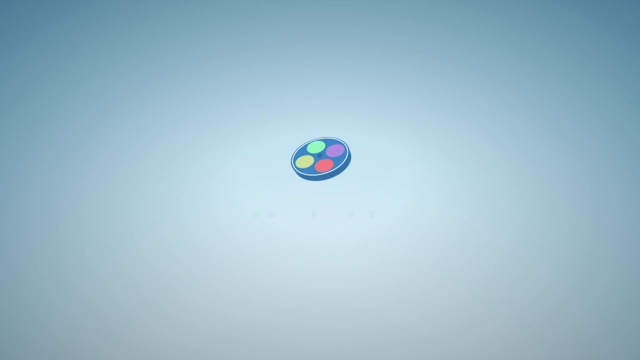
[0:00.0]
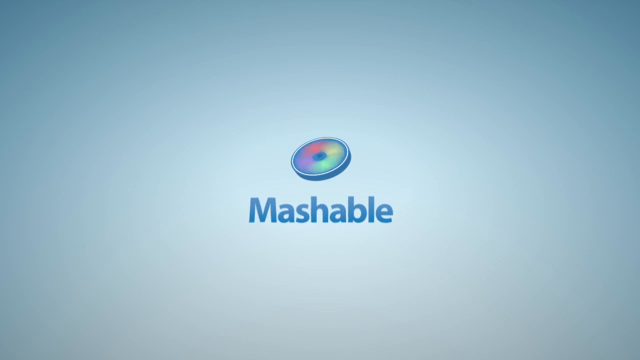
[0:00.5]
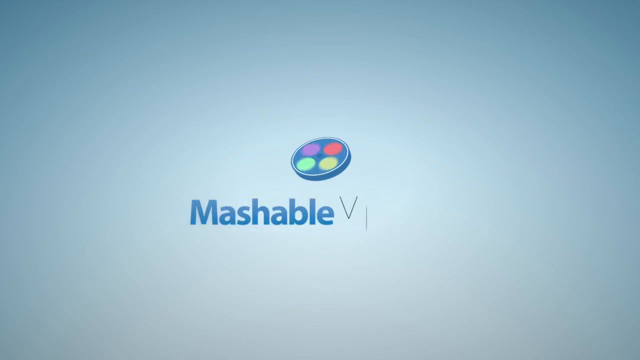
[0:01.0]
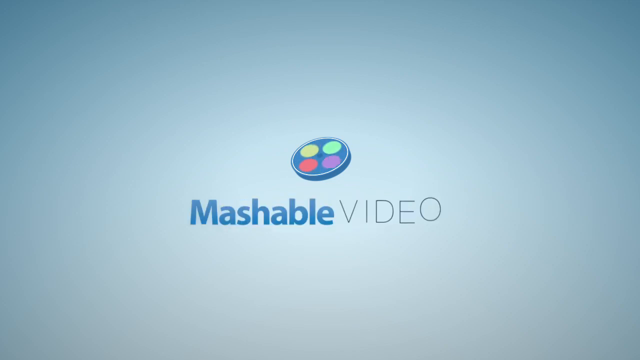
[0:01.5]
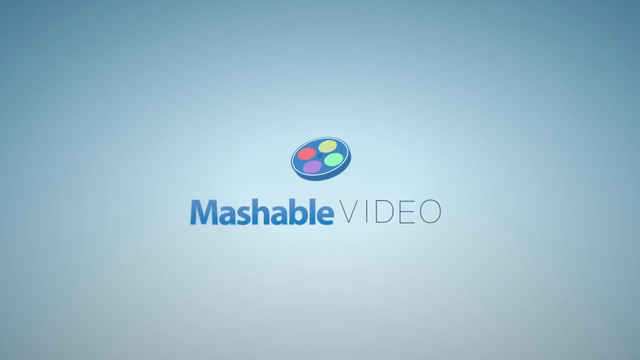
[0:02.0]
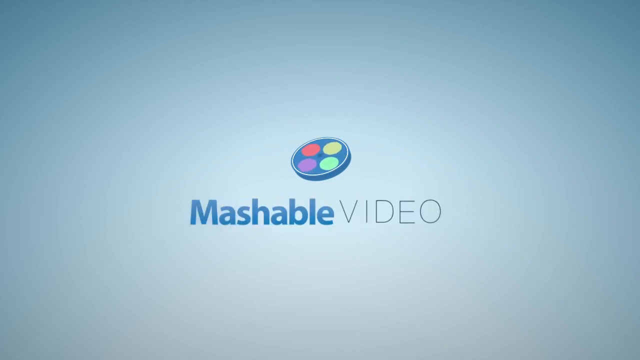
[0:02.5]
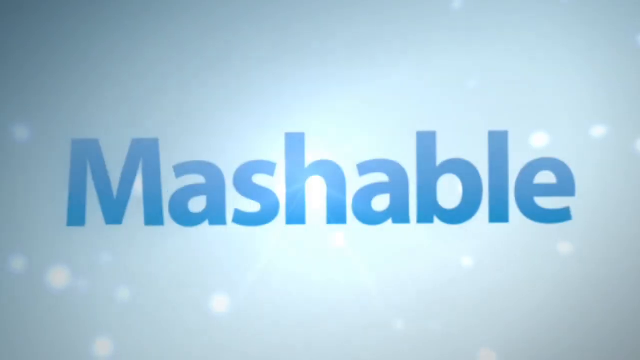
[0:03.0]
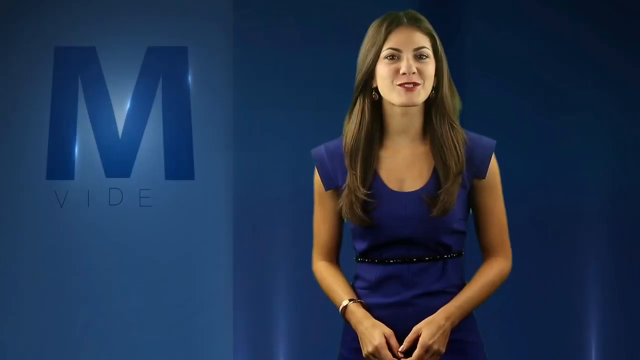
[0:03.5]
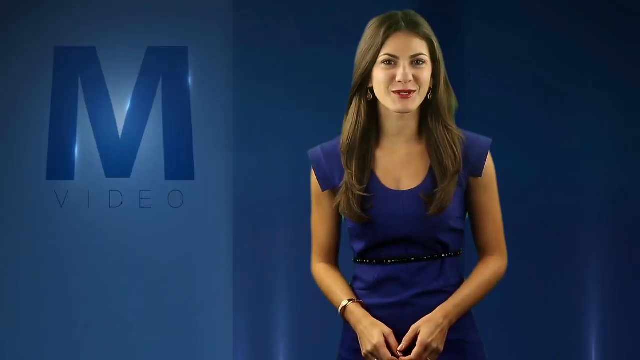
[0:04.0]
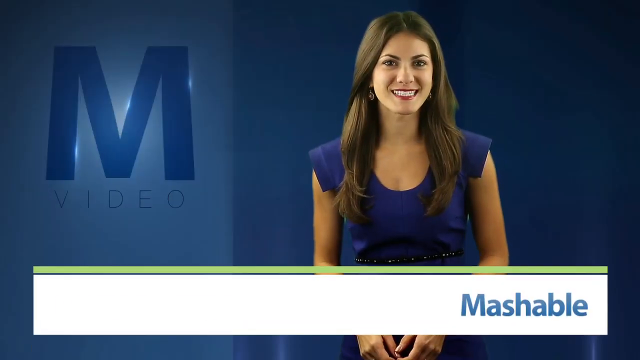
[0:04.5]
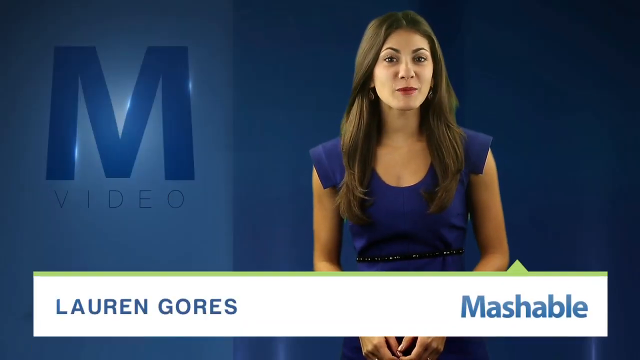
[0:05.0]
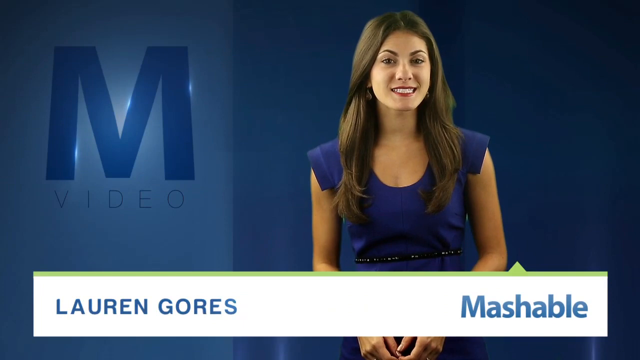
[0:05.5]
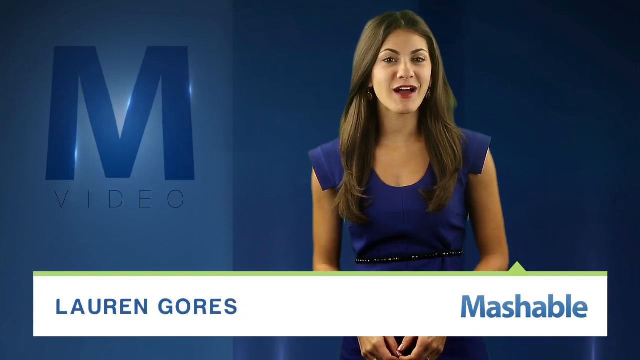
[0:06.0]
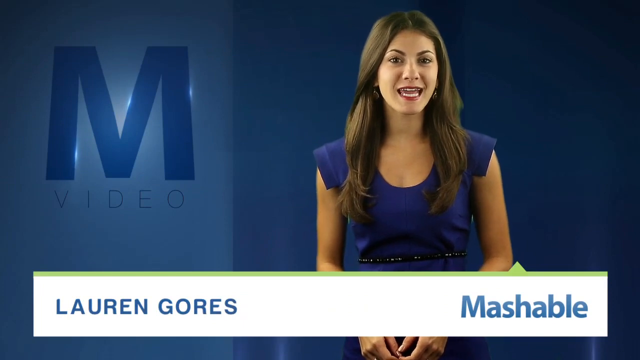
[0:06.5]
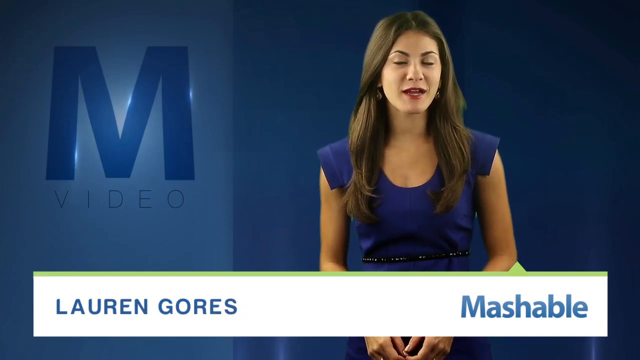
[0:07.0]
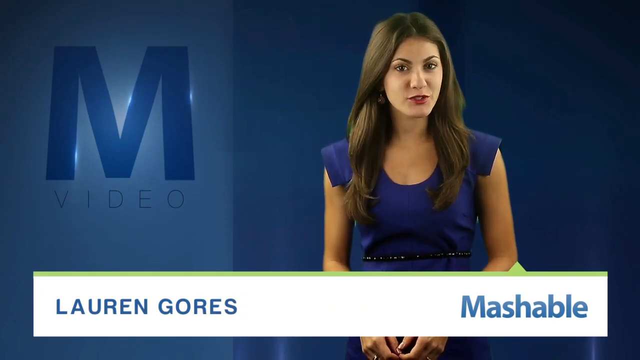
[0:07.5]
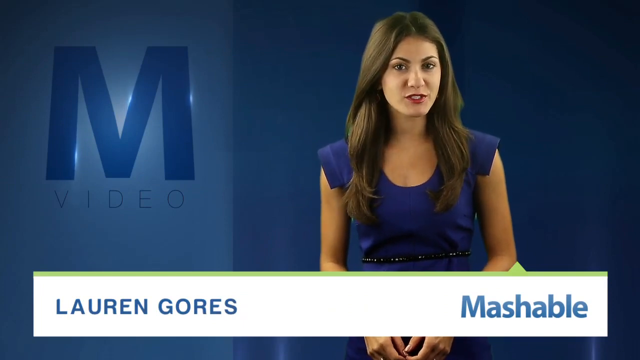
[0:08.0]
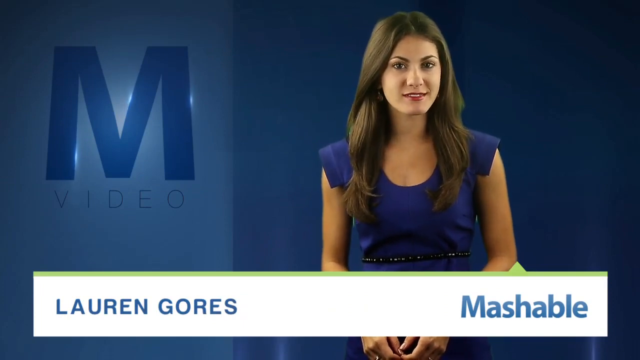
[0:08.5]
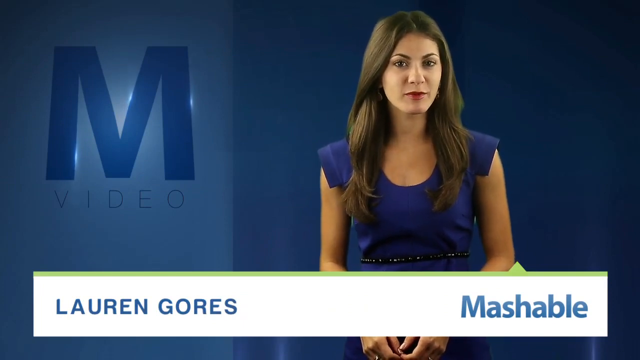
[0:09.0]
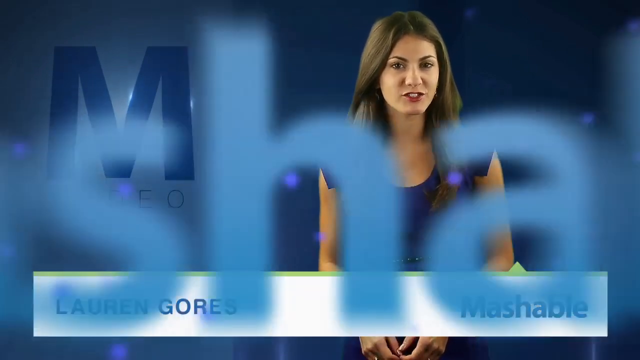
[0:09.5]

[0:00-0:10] The video begins with a very light greyish-blue background, with darker blues on the edges and corners and a bit of black at the bottom. In the center, a round, somewhat three-dimensional disc with four separate circles and colors spins to the right, clockwise; this is the logo. As it spins, a smaller red circle is visible within, a purple one above, a light green one to the left of the purple, and a yellow one between the red and the green. The word "mashable" appears in dark blue text and slides slightly to the left in the center of the frame, followed by the word "video" in black text. The large word "mashable" then disappears, opening to a scene that is dark blue on the right and slightly lighter blue on the left, with a young woman who is the host of the program. She is Caucasian and slender, with dark brown hair just past her shoulders, brown eyes, and full makeup, and is very attractive. A large blue "M" is on the left side of the screen, and her name, "Lauren Gores", appears at the bottom against a white banner.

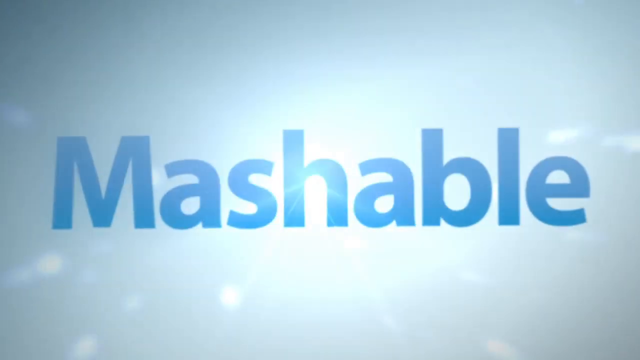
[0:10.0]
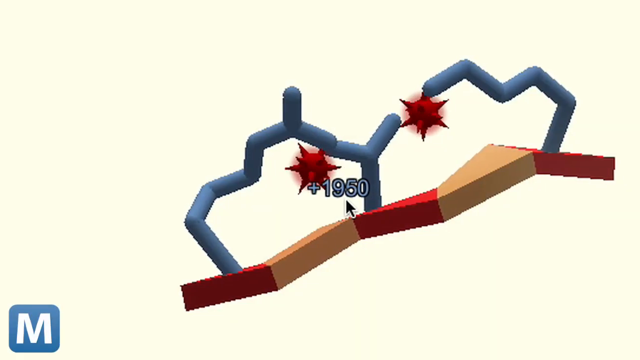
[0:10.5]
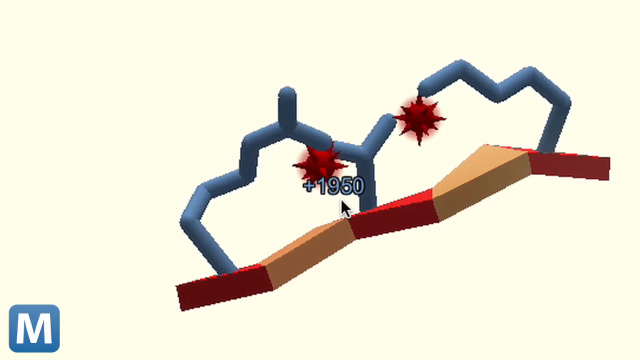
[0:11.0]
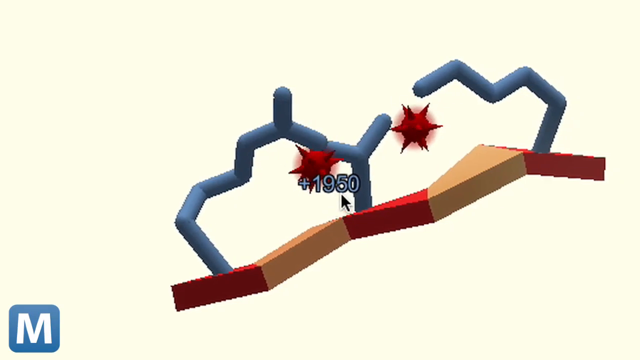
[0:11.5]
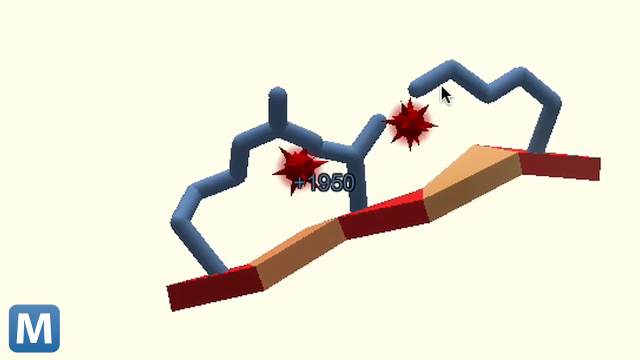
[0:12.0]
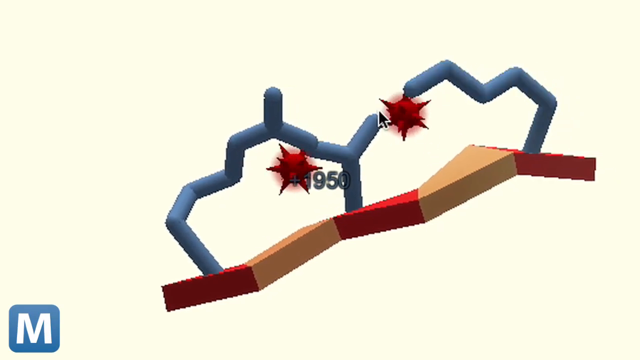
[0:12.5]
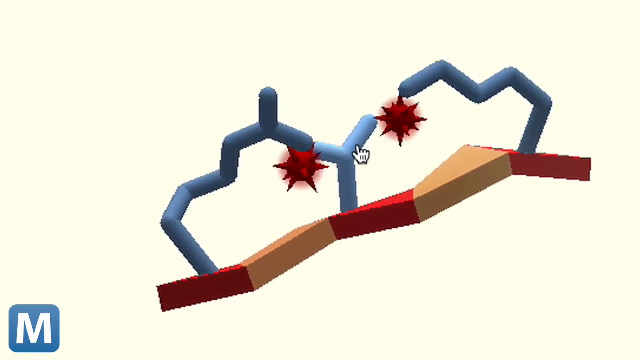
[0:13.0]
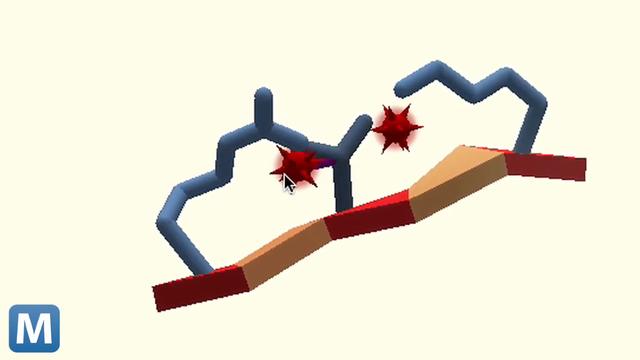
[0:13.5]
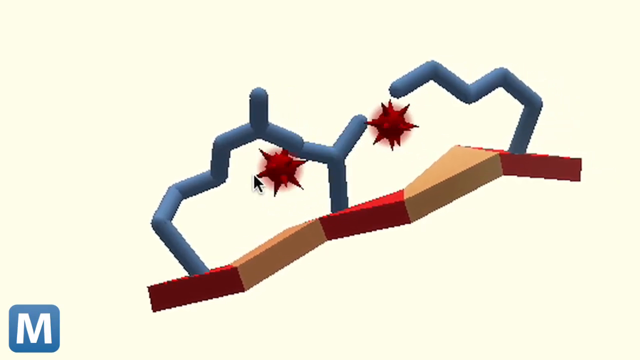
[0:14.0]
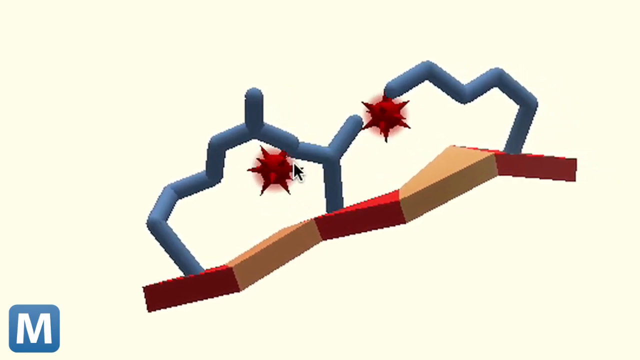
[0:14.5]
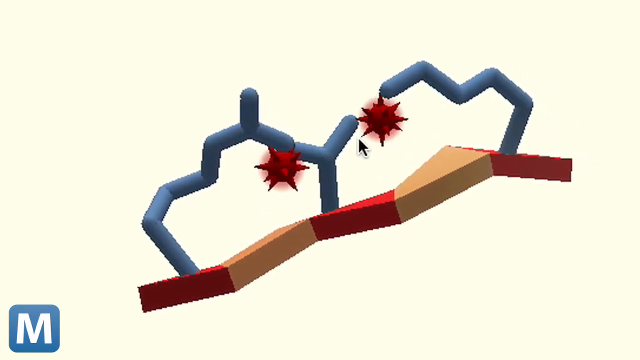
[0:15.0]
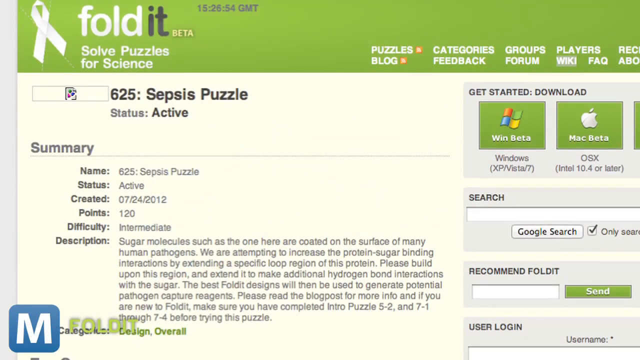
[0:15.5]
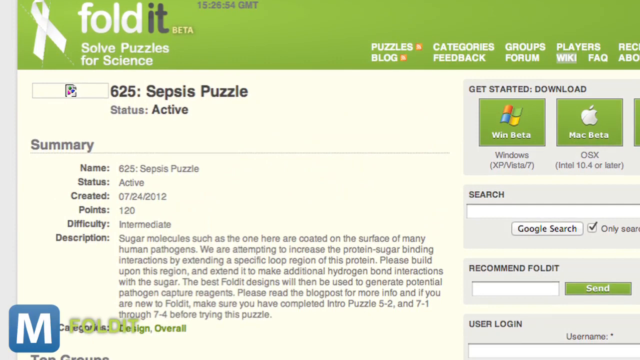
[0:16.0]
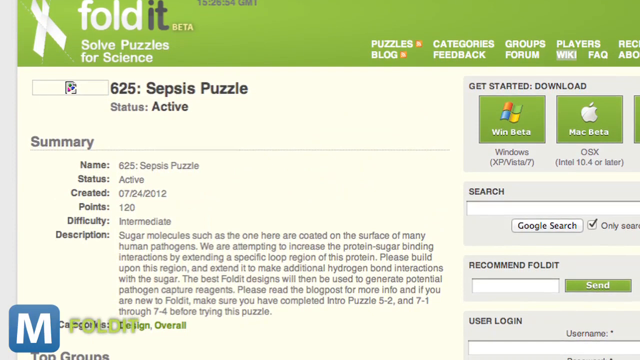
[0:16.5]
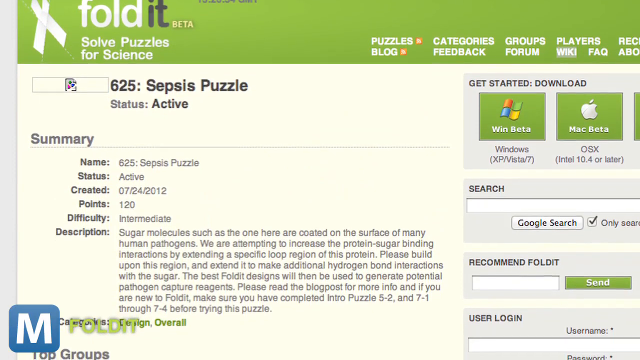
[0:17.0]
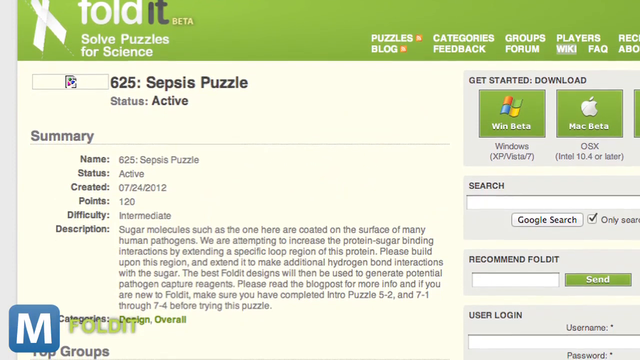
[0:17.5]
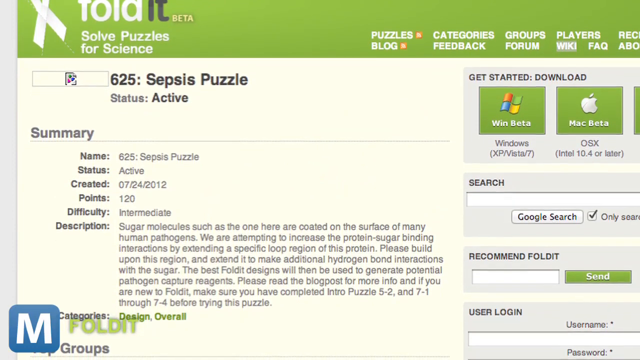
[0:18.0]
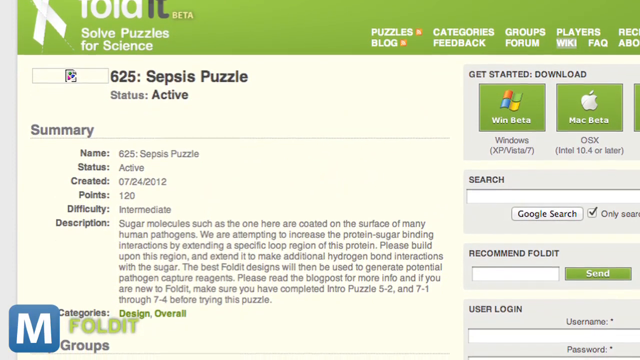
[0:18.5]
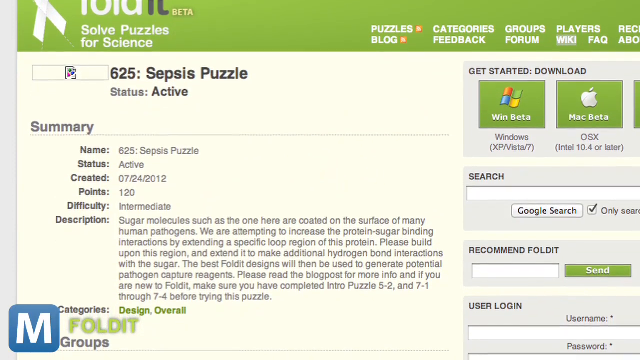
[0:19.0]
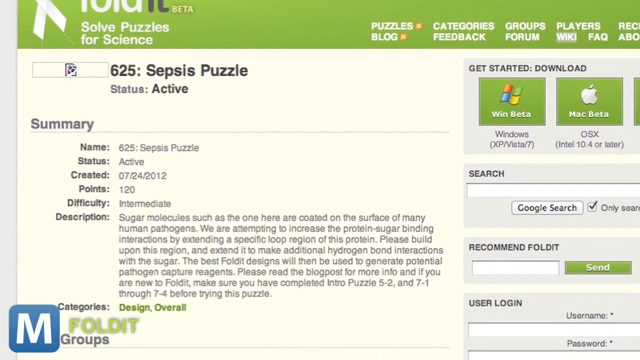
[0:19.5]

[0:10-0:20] Against a light blue background with reflective white lights, mainly in the lower left and middle right of the screen, the word "mashable" appears in blue block letters, spelled M-A-S-H-A-B-L-E. The next screen shows a logo of a white M in a blue square in the lower left. What looks like possibly a scientific diagram follows: blocks of red and yellow run diagonally from the middle lower left to the middle upper right, with what look like dark blue tubes and two red star-like shapes spinning round and round. The screen then changes to text against a green background.